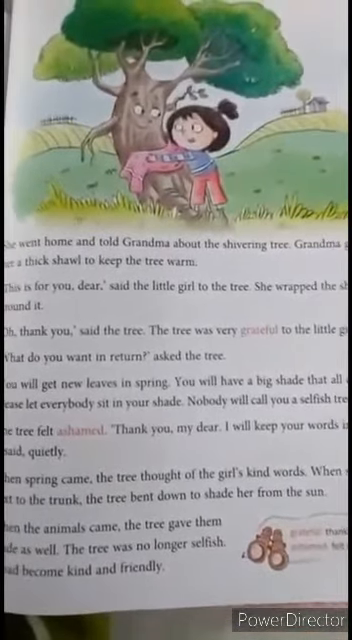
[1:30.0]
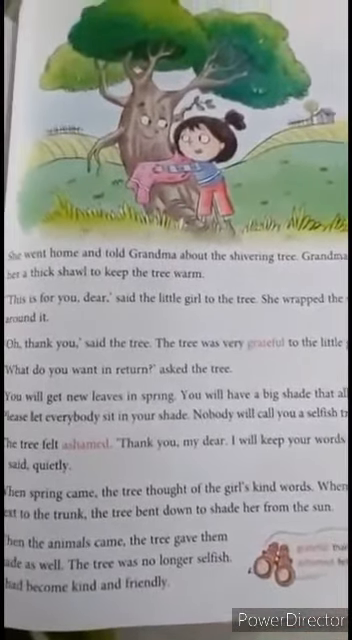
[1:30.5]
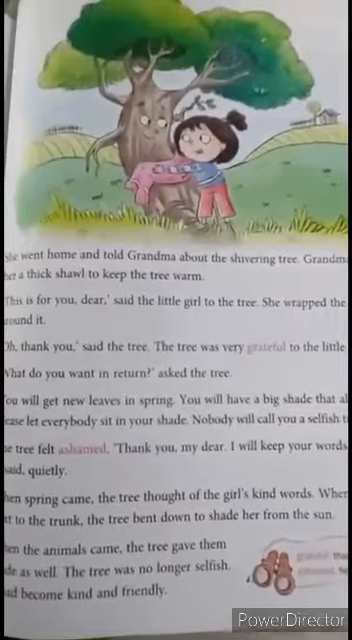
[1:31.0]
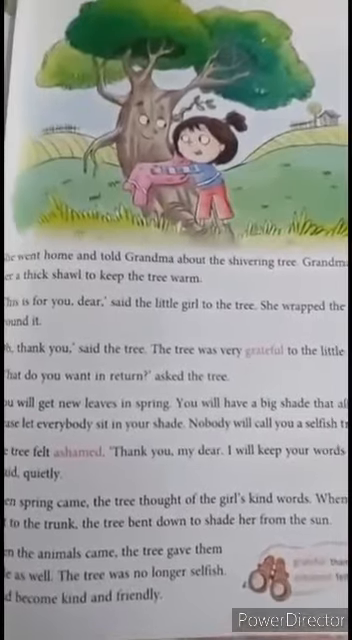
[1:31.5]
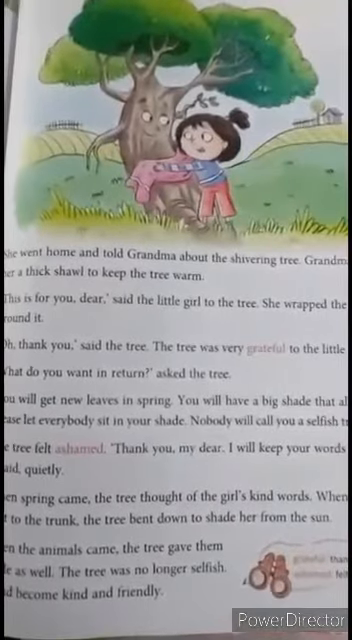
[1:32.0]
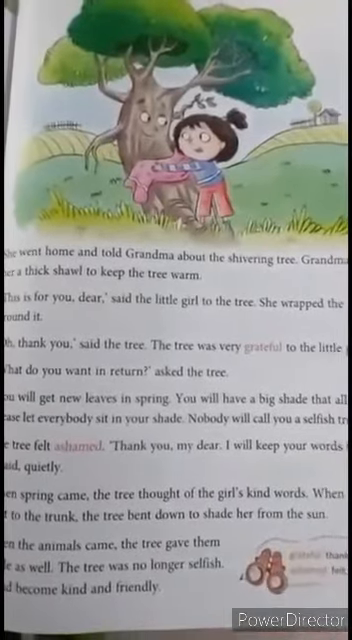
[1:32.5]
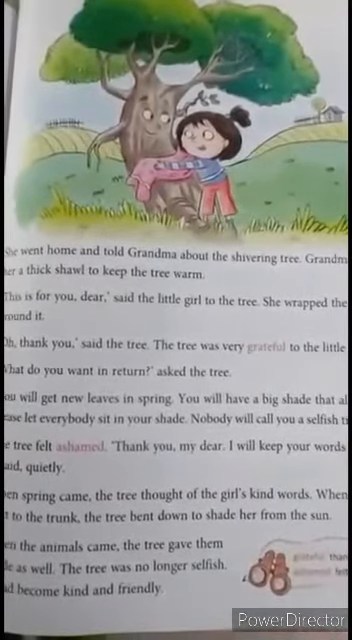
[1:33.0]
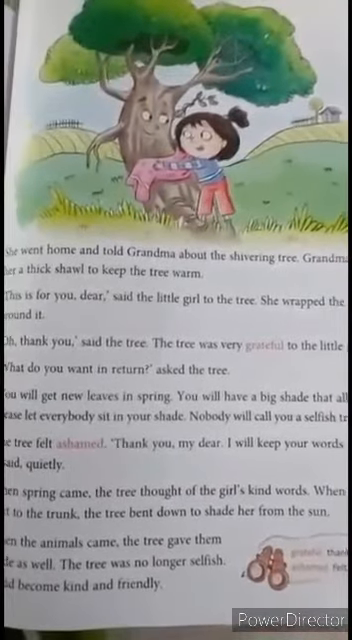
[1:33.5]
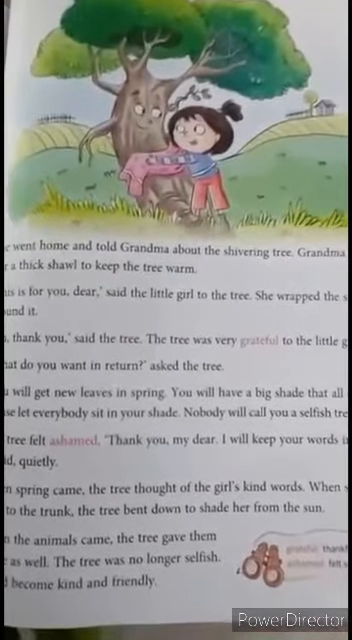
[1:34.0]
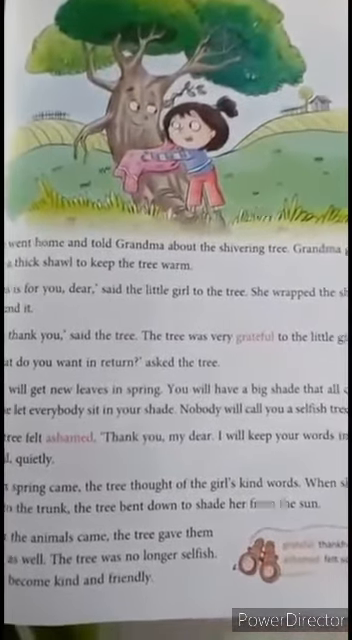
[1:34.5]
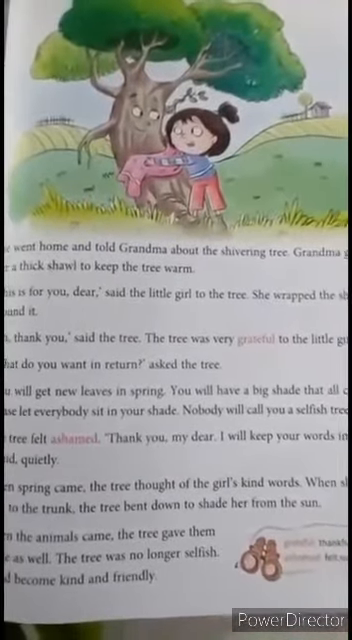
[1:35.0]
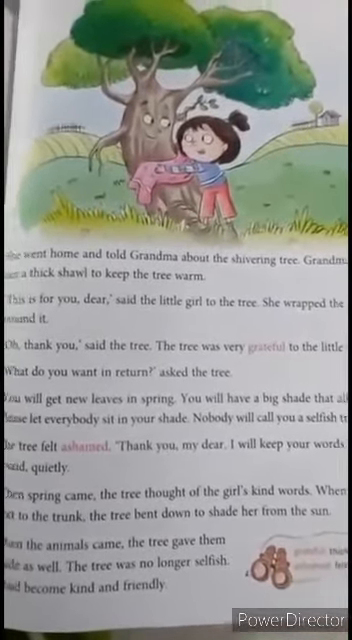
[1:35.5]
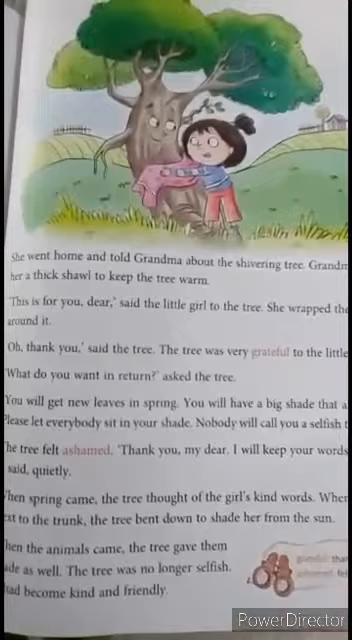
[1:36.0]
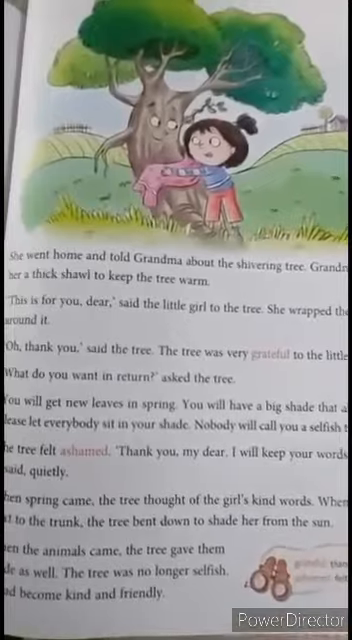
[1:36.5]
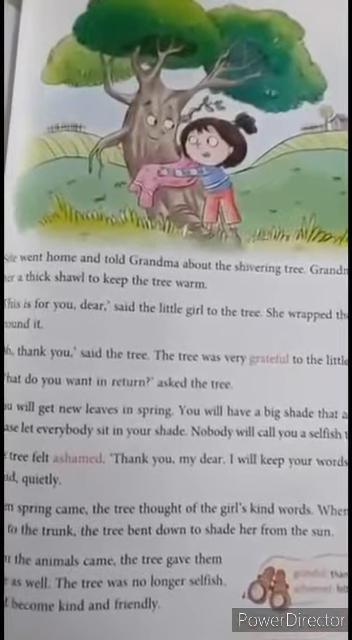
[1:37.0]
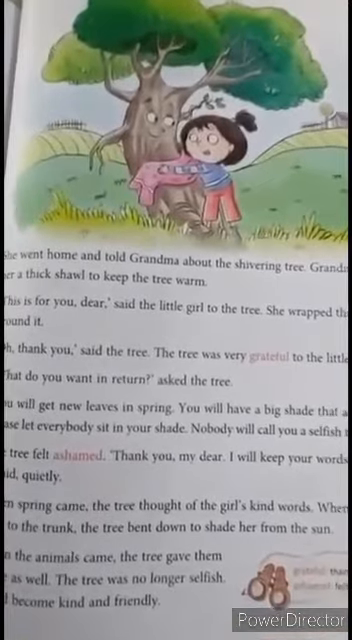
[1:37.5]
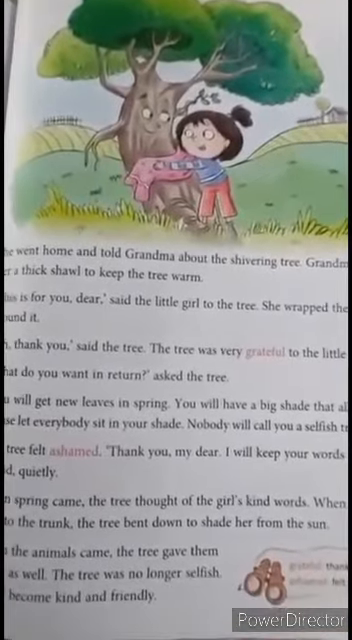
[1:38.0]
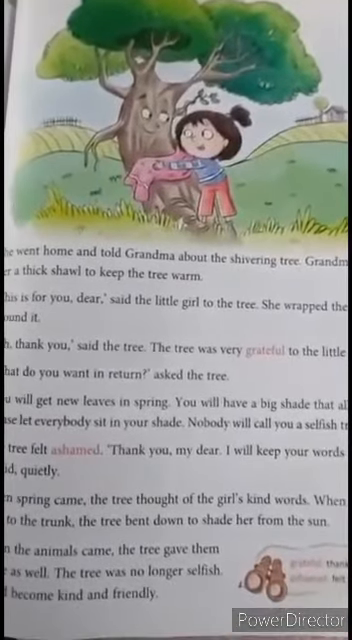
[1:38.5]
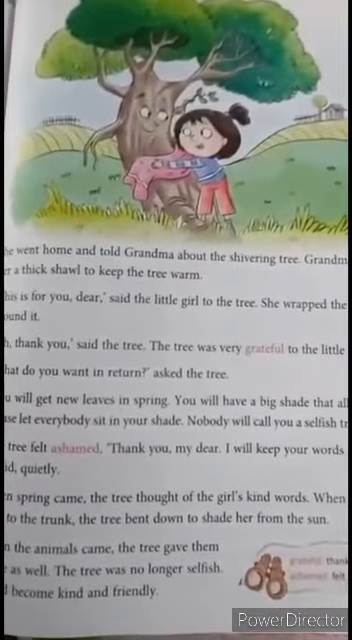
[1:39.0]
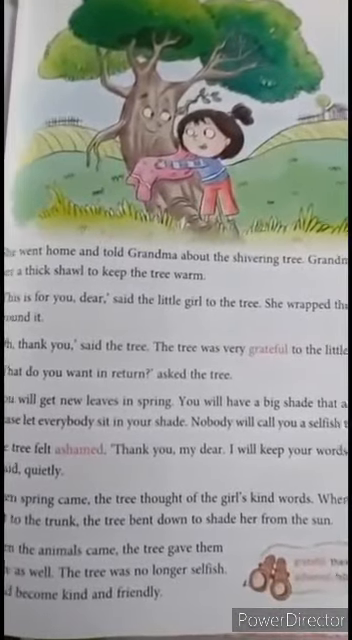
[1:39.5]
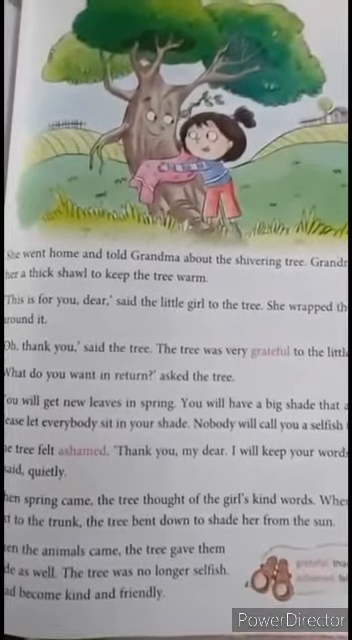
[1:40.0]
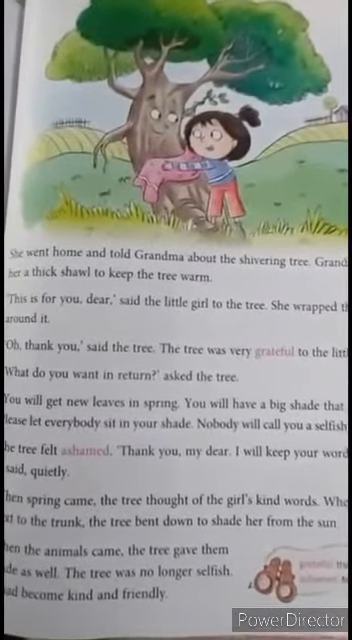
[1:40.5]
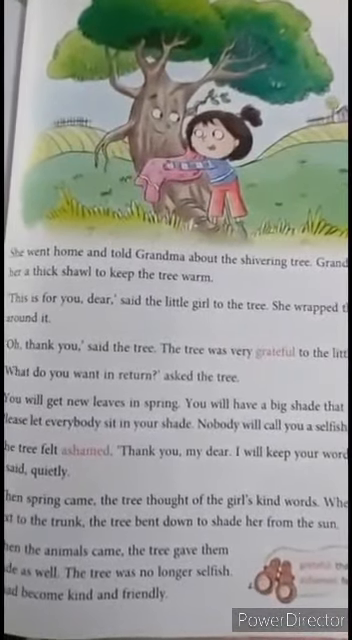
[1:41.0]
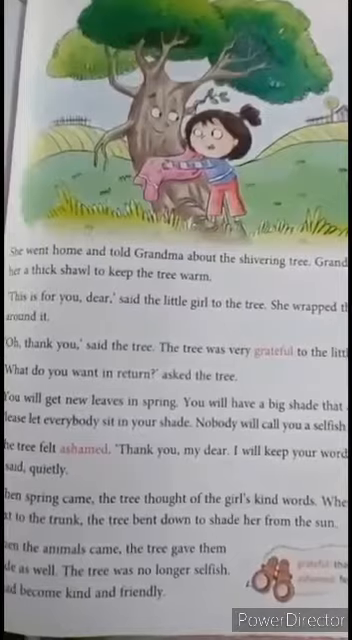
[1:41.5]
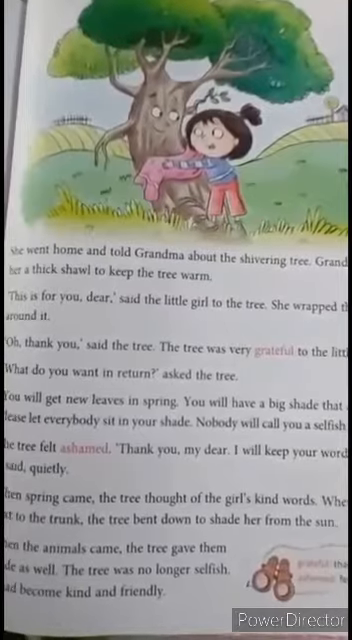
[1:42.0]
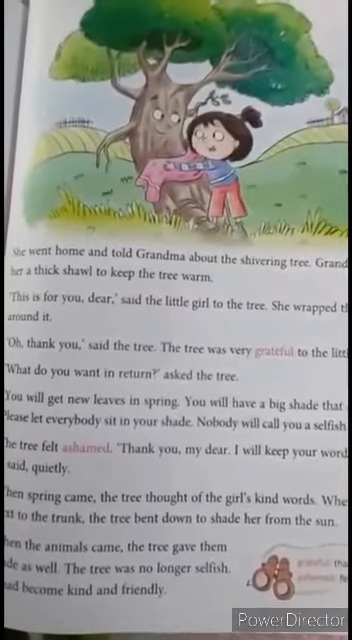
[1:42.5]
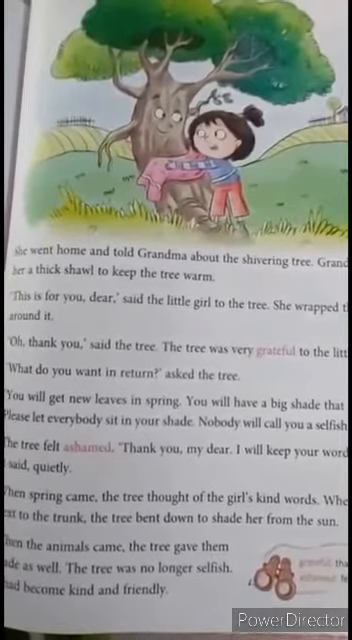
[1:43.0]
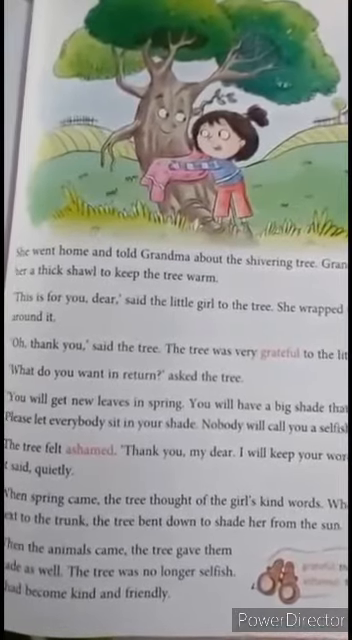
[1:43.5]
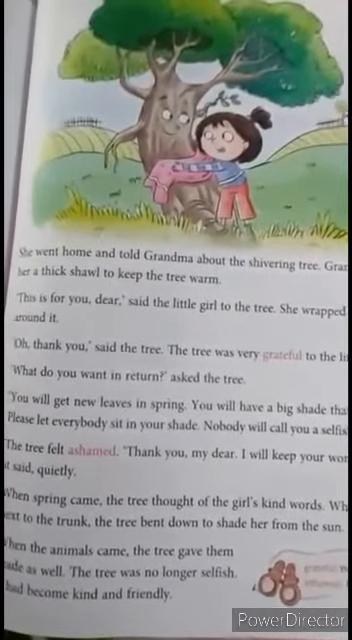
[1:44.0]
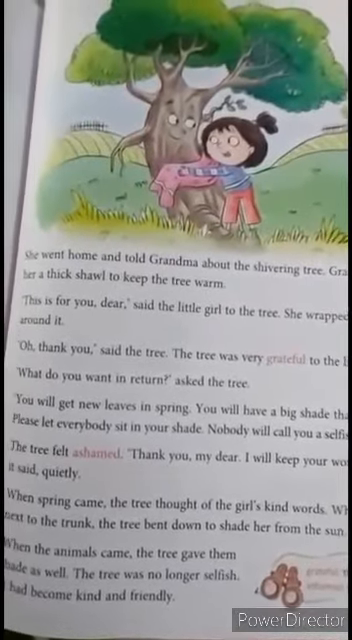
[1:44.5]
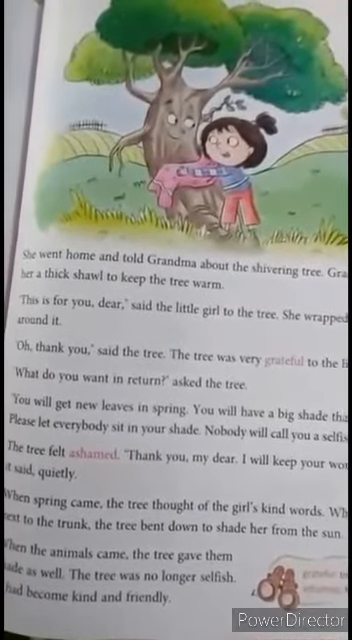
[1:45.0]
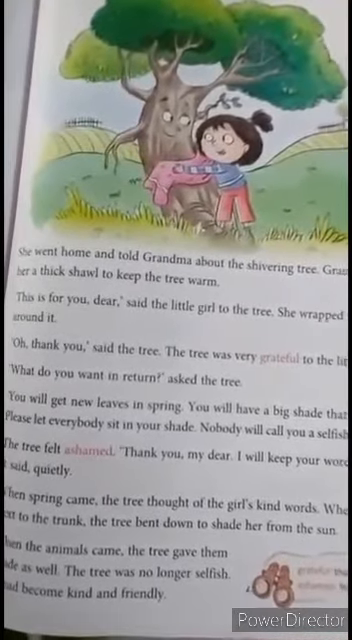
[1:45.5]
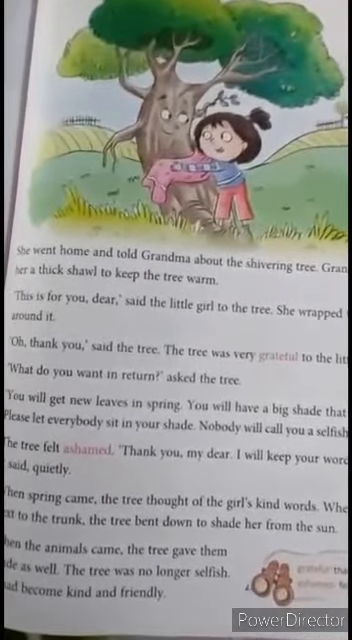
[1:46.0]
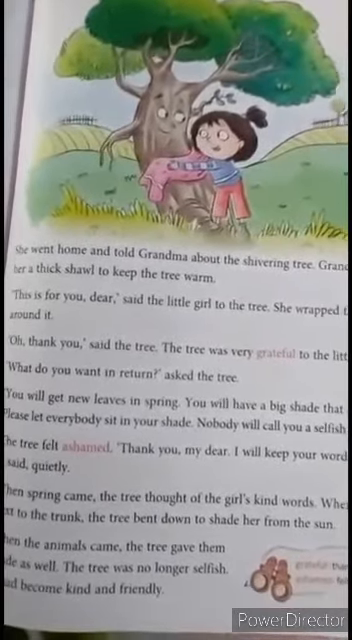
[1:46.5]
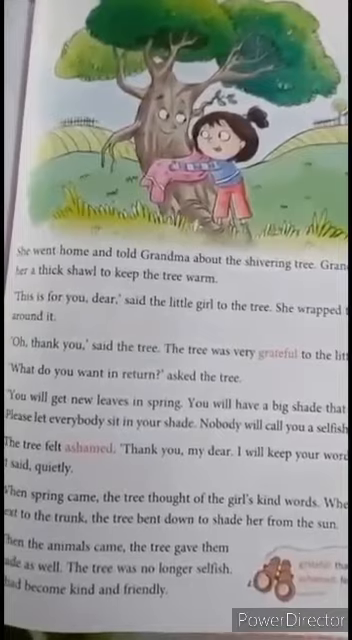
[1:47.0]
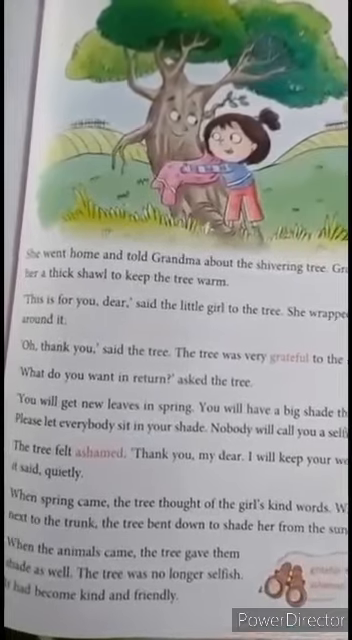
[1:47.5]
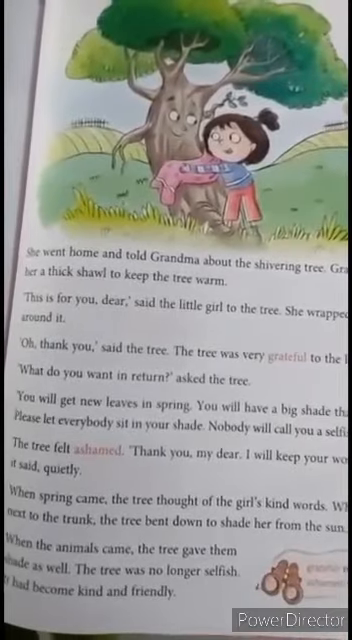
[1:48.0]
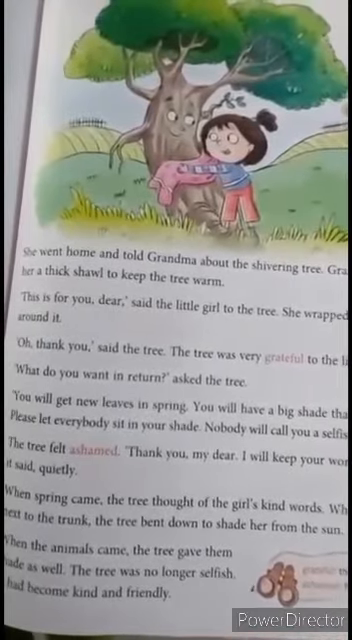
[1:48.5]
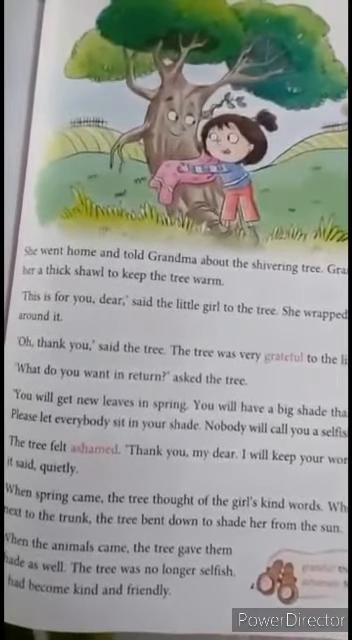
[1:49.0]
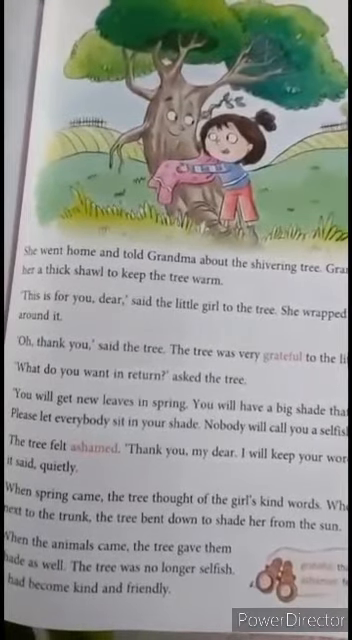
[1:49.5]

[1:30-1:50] At the top of a page of the open children's book is a tree with eyes and a smile. The top of the tree is green, and a couple of its branches look like hands. Just underneath the tree's eyes and mouth, a little girl looks at the tree with a smile; she and the tree's eyes are looking at one another. She has brown hair pulled back in a ponytail and wears pink pants and a blue shirt. The image is blurry, but she is taking off her sweater or putting it on.